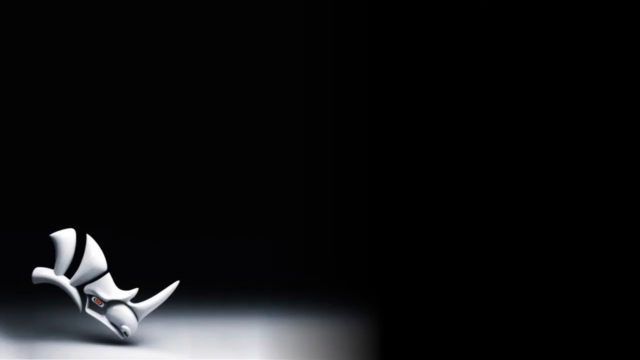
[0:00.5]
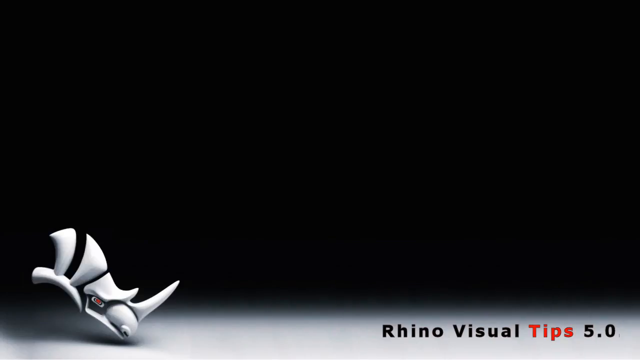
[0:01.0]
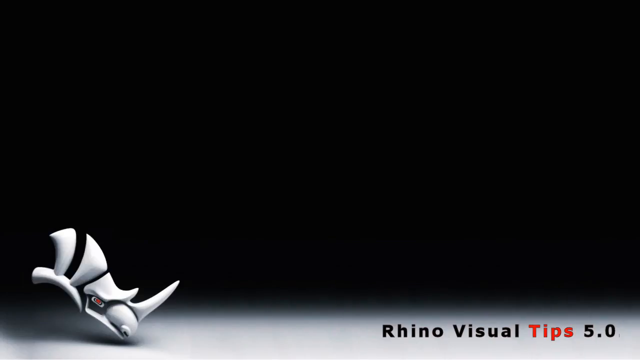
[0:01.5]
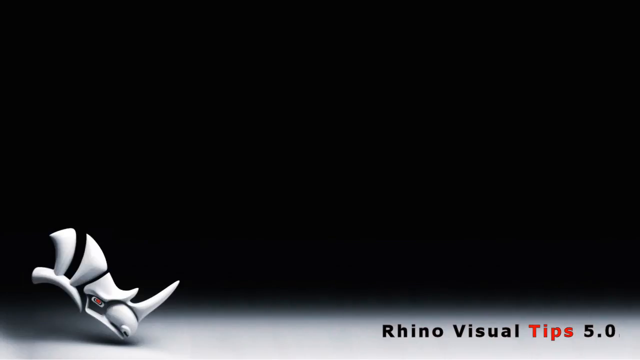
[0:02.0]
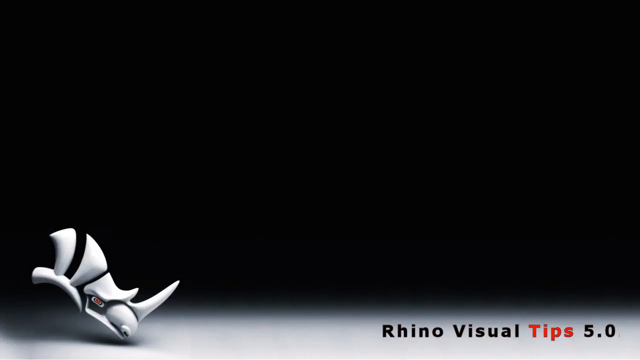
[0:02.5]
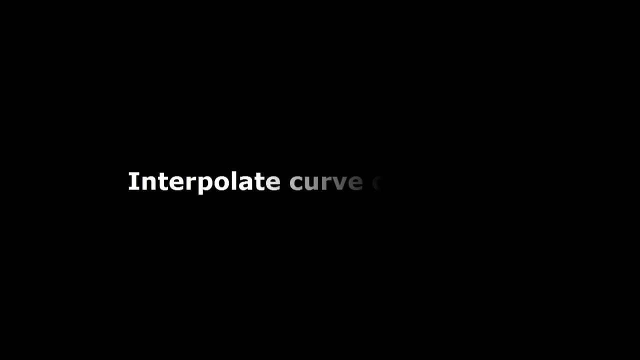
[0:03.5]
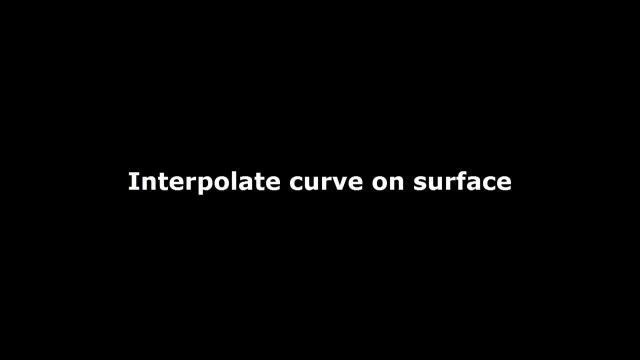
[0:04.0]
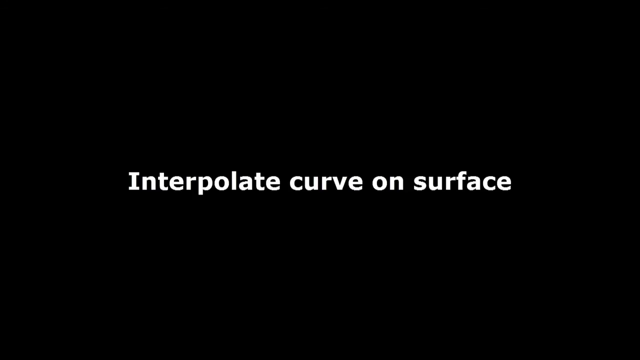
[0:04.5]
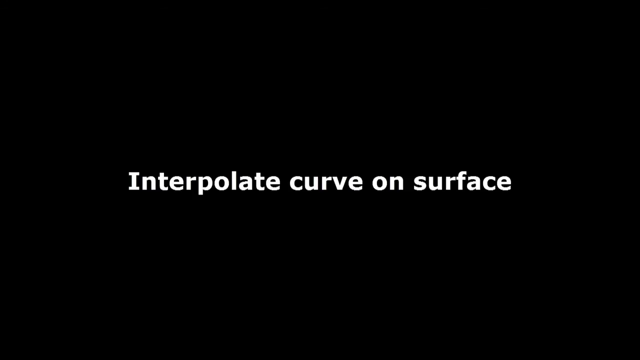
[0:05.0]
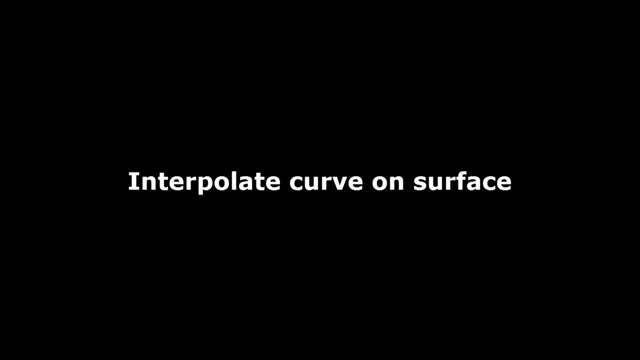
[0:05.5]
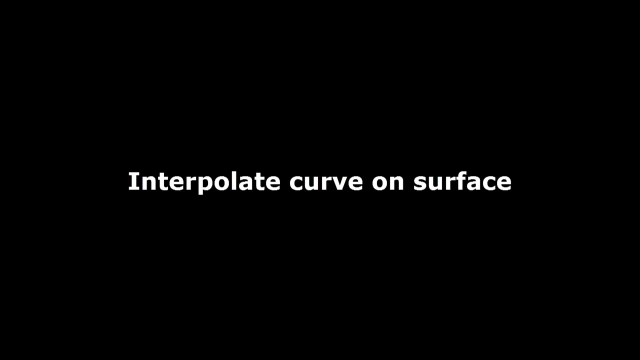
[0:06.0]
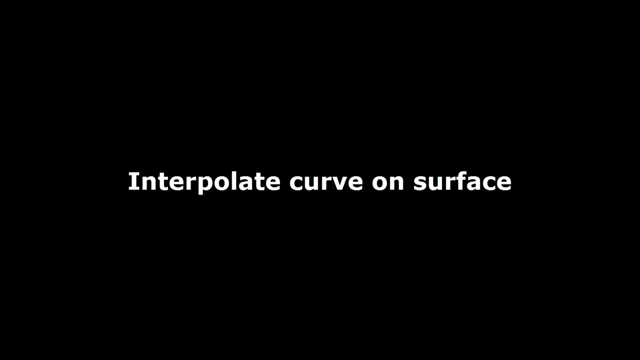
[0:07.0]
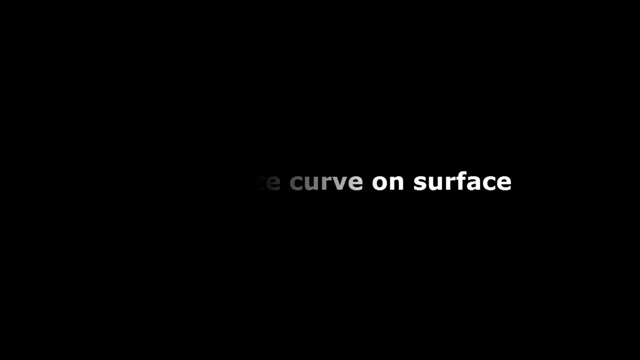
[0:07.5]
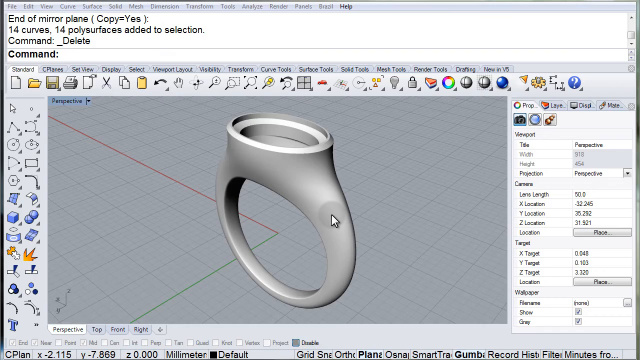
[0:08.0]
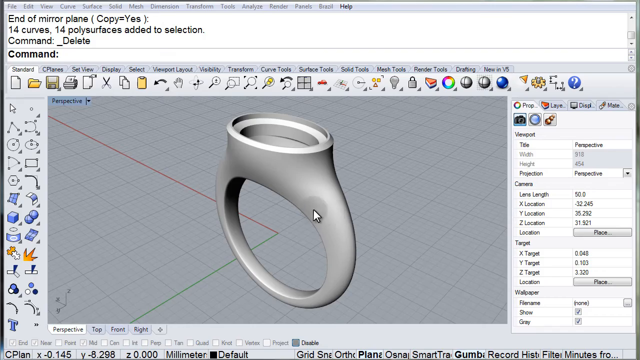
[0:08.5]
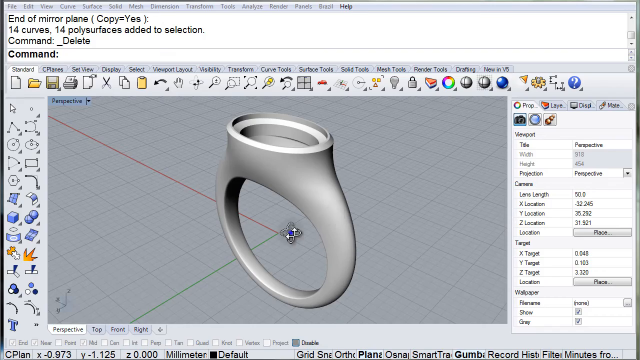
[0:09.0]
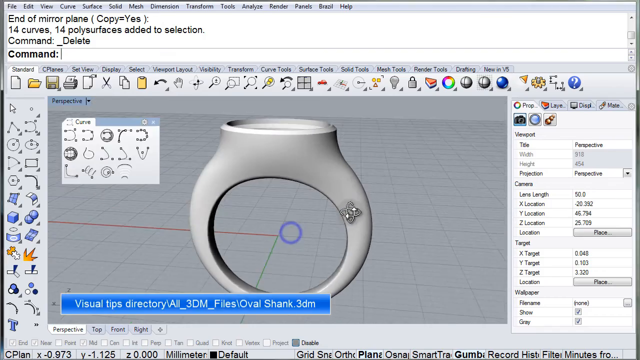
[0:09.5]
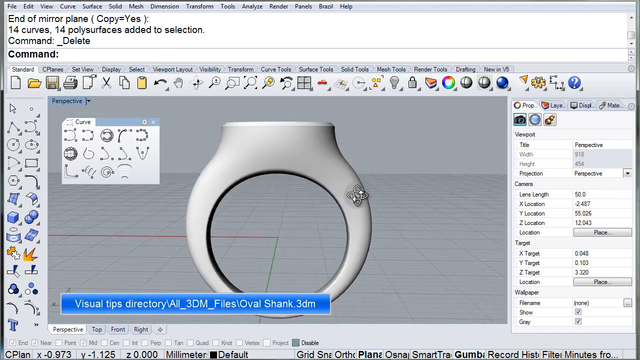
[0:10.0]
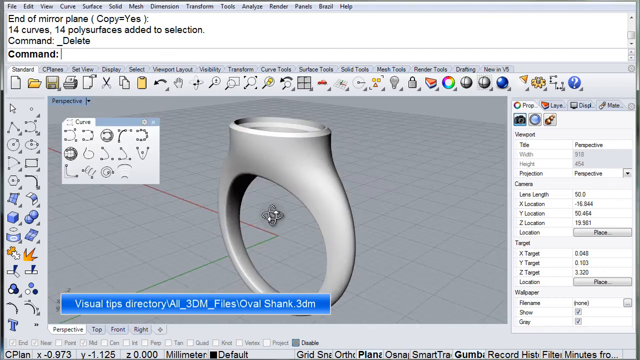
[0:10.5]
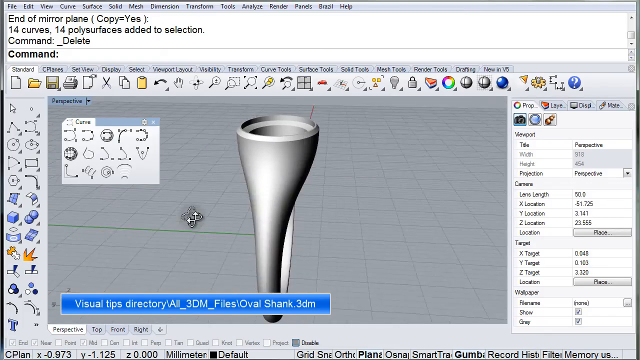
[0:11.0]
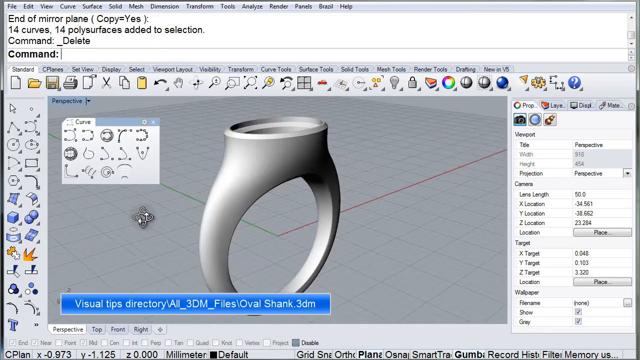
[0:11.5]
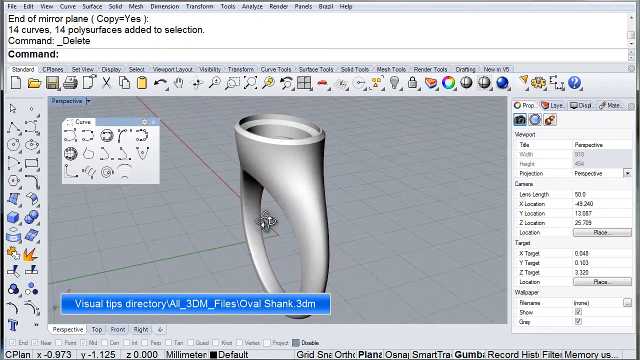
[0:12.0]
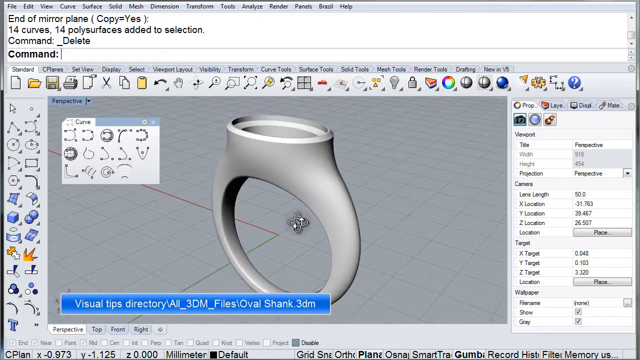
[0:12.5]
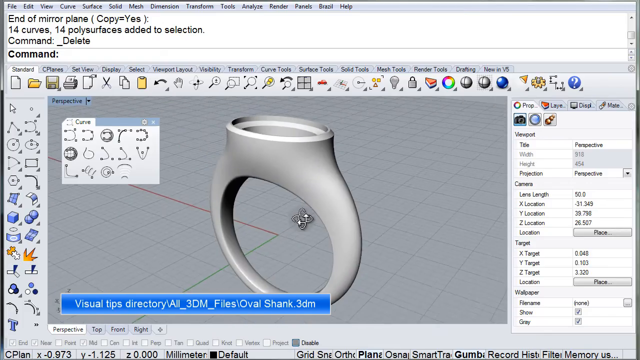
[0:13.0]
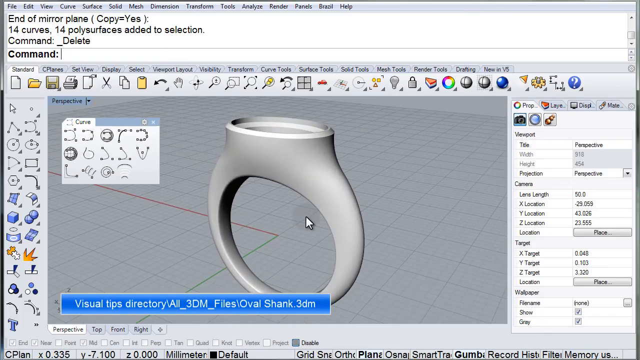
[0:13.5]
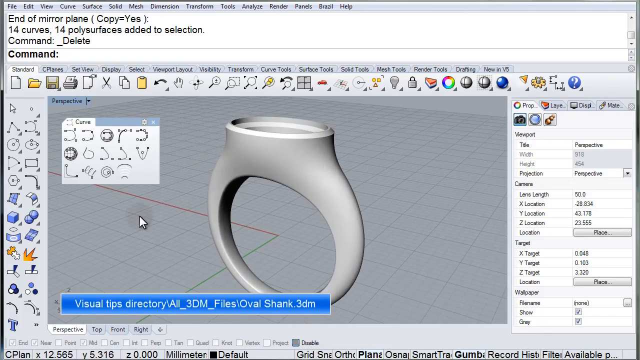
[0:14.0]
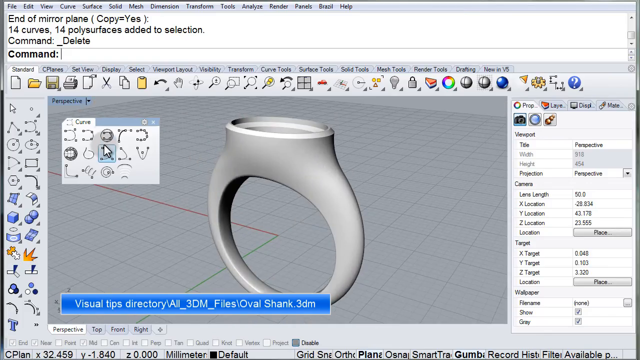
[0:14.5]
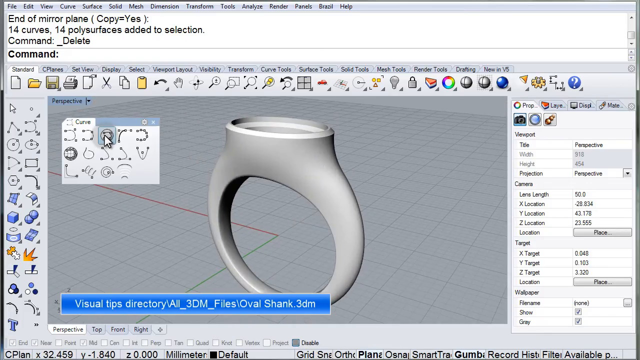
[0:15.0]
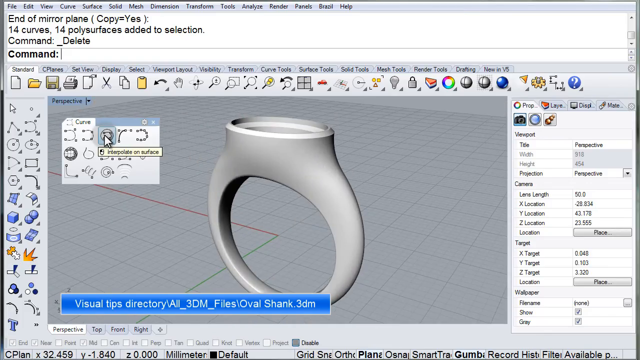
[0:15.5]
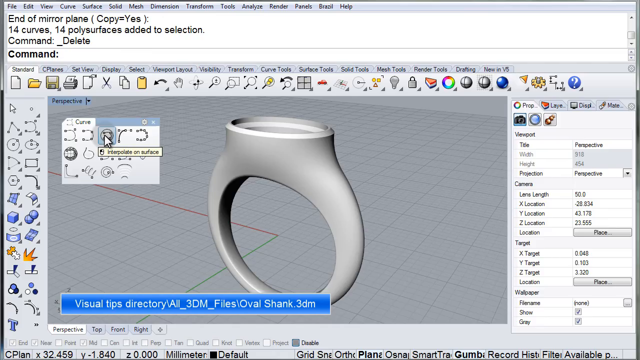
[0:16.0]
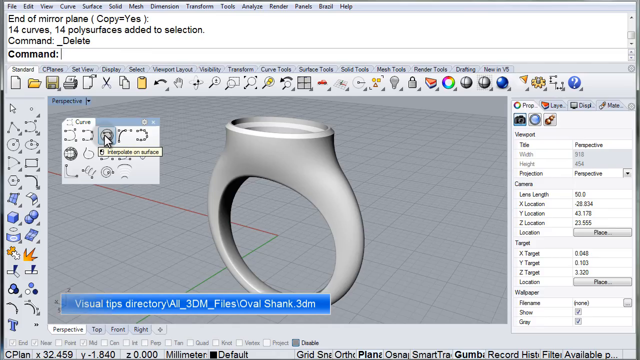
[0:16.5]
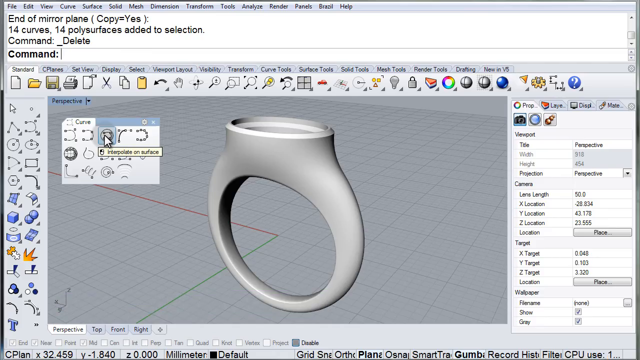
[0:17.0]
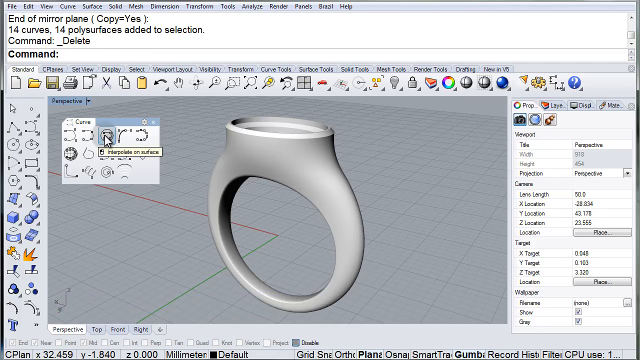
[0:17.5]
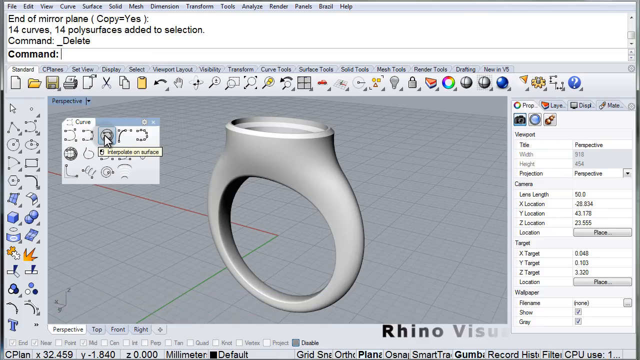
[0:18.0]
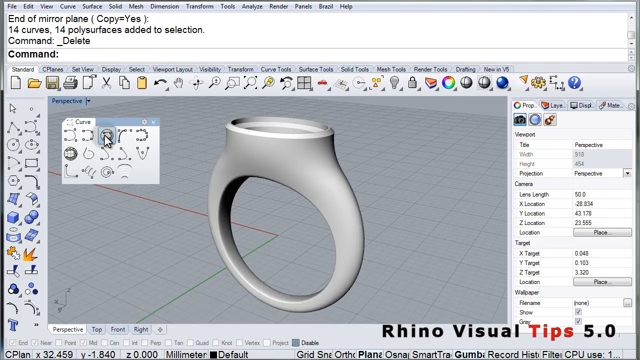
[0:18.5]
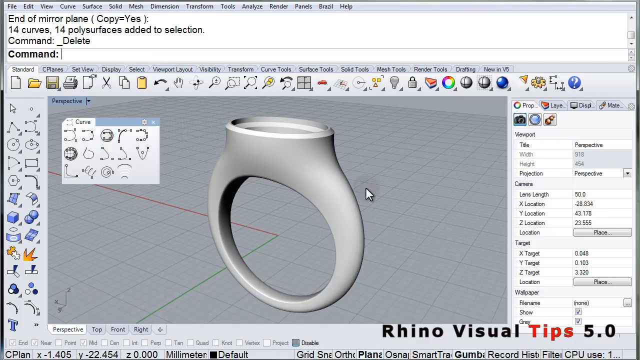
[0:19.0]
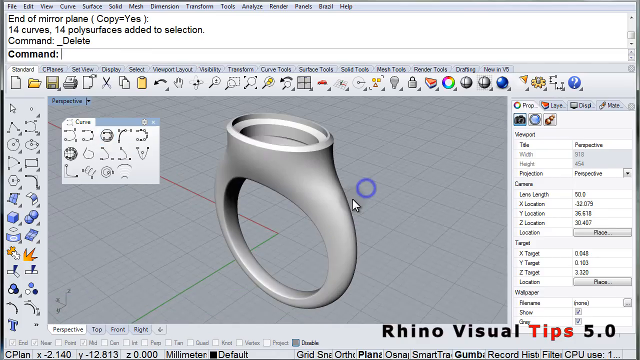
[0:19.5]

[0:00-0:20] What looks like a how-to for modeling objects opens with a logo: a 3D-modeled, computer-generated model of a rhino, followed by the text "Rhino Visual Tips 5.0". Next, white text on a black screen reads "Interpolate Curve on Surface", the words appearing kind of one by one. The video then moves into a screen recording of what looks like Blender or a similar modeling software, showing what looks like the shank of a ring, modeled in plain white with no texture, with a space on top where a setting such as a diamond or gem could go. The ring is on a gray grid surface crossed by one green line and one red line intersecting at a perpendicular angle. The mouse comes in, clicks on the ring shank, and clicks and drags to move it around in space a bit. A menu labeled "Curve" then appears with a few different tool options; the mouse clicks on one and hovers over it, and the tool reads "Interpolate Curve on Surface".